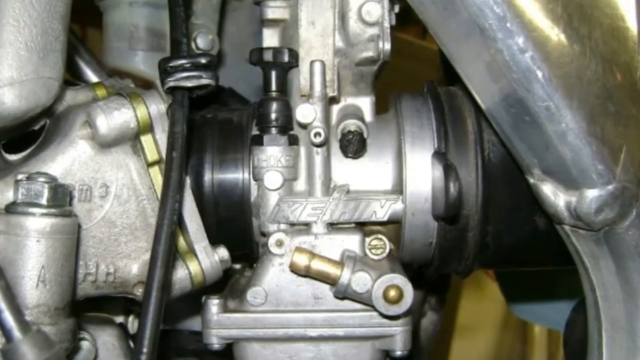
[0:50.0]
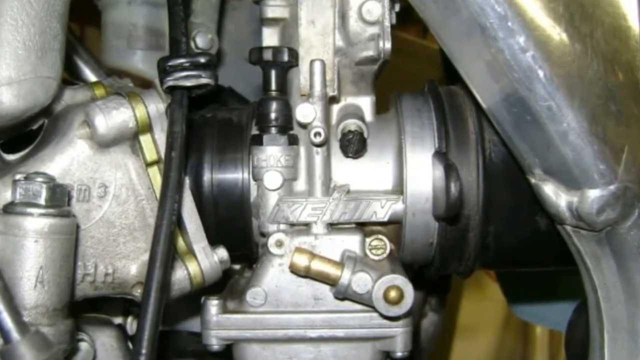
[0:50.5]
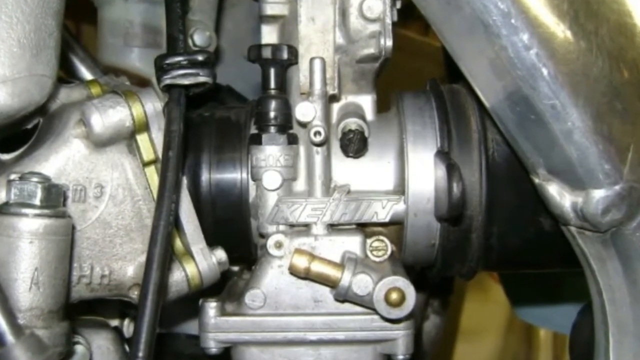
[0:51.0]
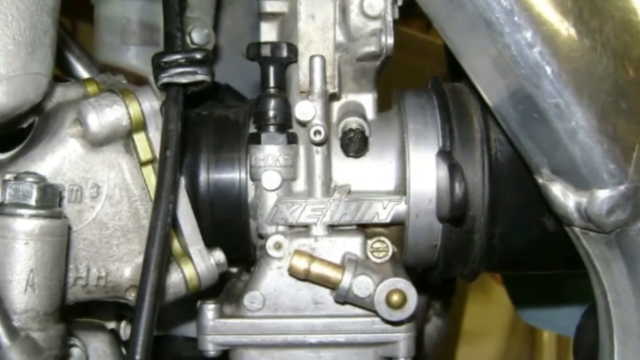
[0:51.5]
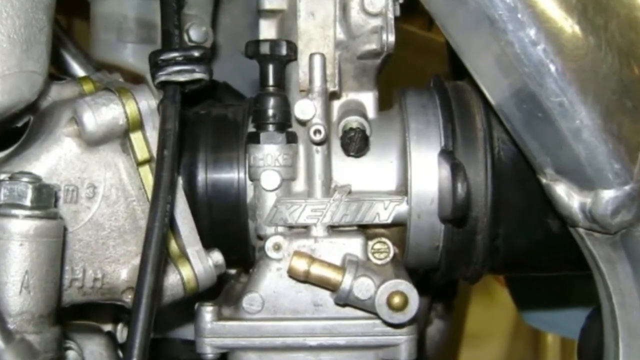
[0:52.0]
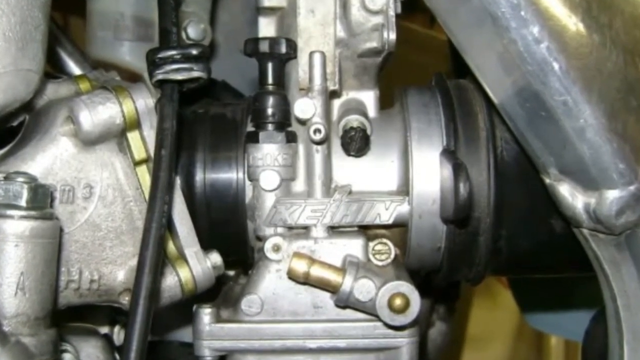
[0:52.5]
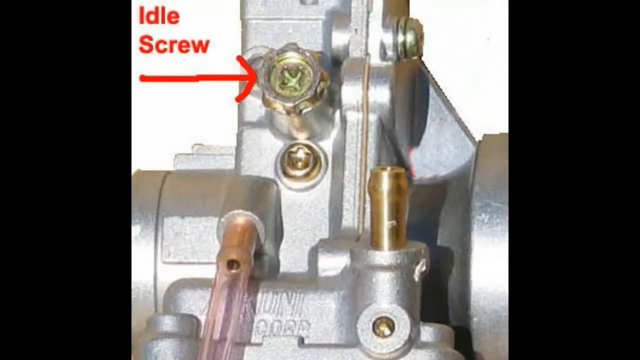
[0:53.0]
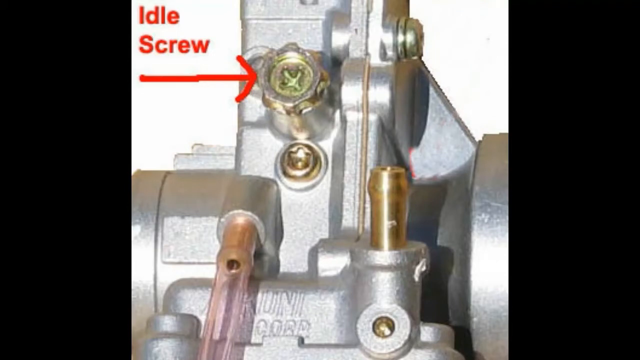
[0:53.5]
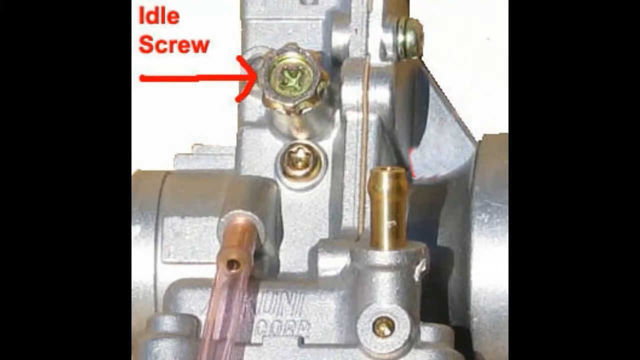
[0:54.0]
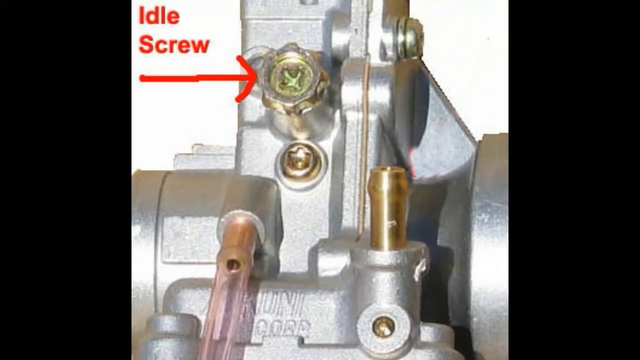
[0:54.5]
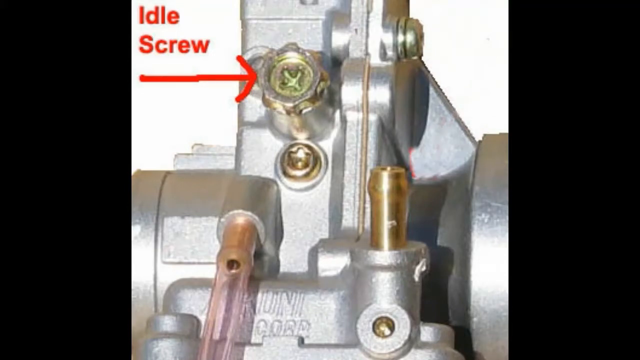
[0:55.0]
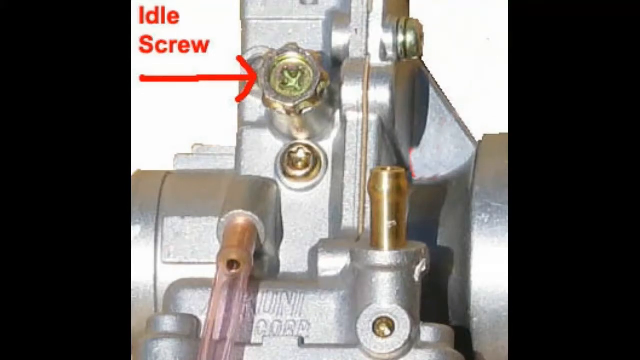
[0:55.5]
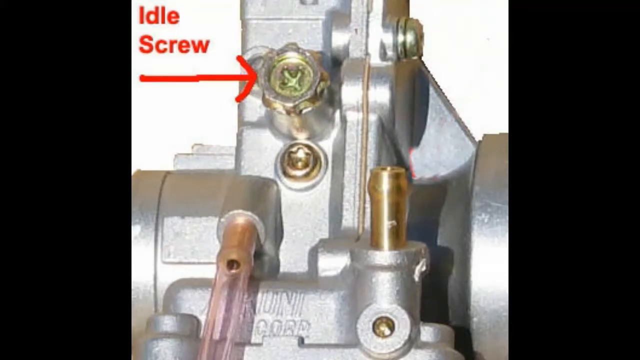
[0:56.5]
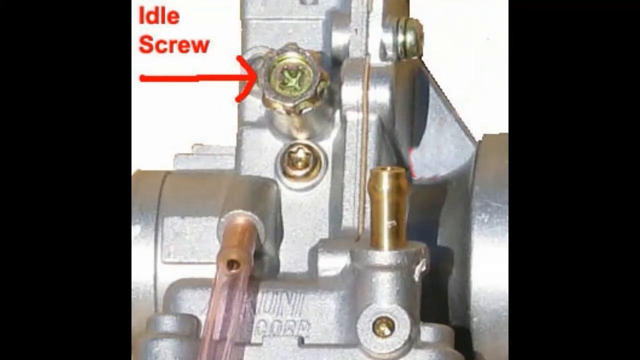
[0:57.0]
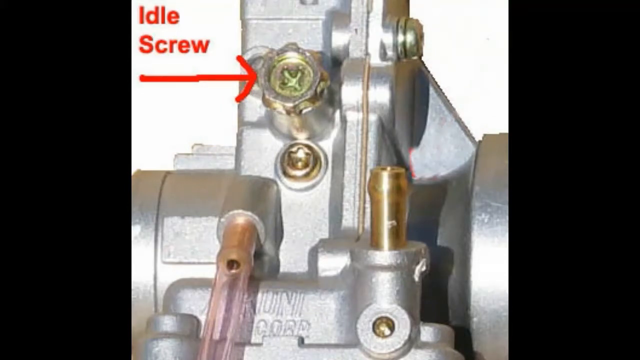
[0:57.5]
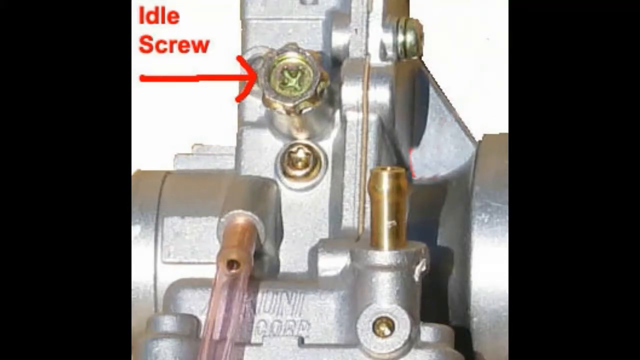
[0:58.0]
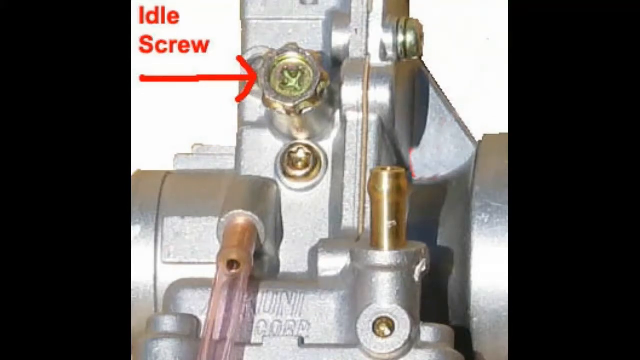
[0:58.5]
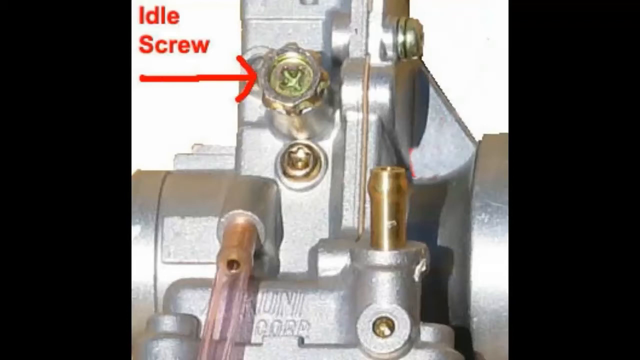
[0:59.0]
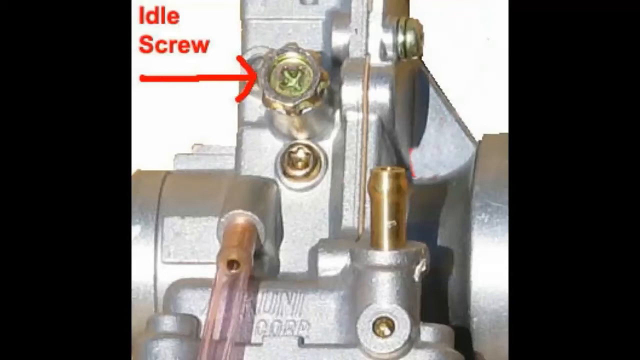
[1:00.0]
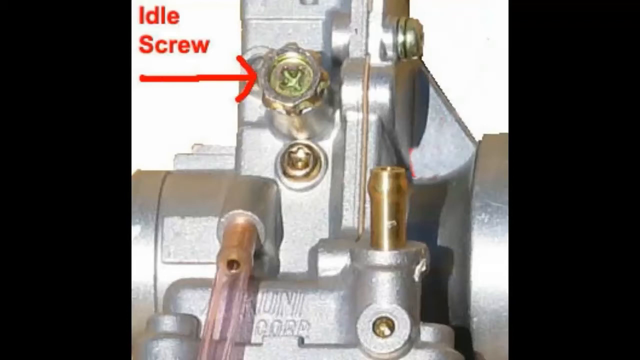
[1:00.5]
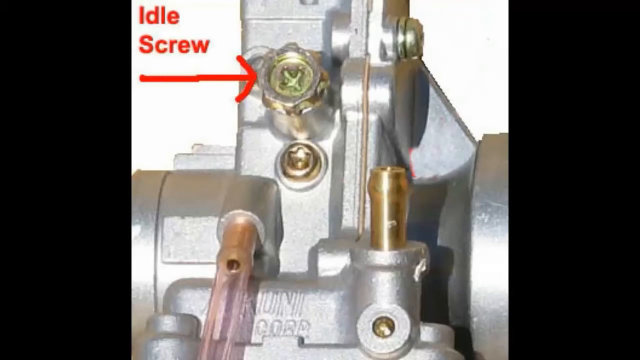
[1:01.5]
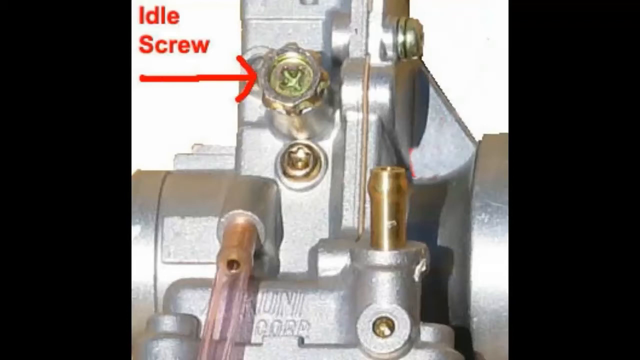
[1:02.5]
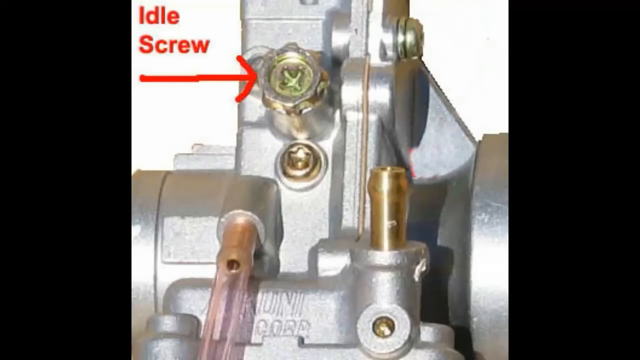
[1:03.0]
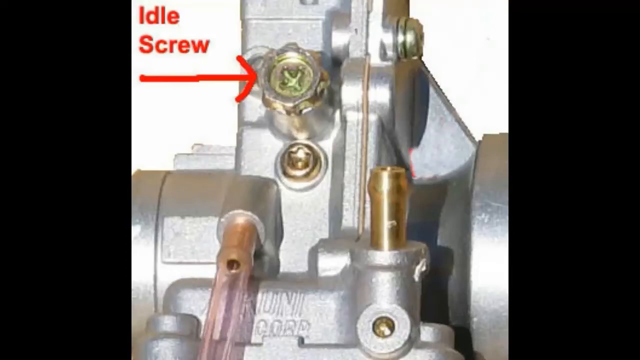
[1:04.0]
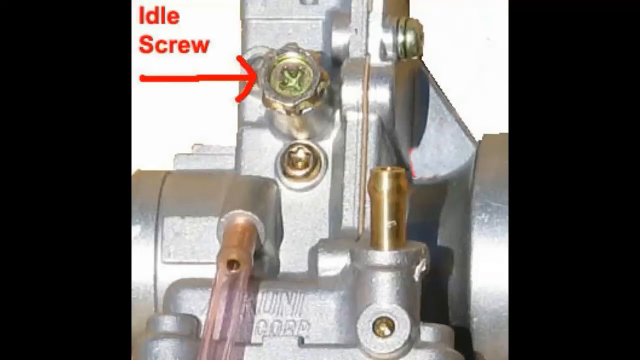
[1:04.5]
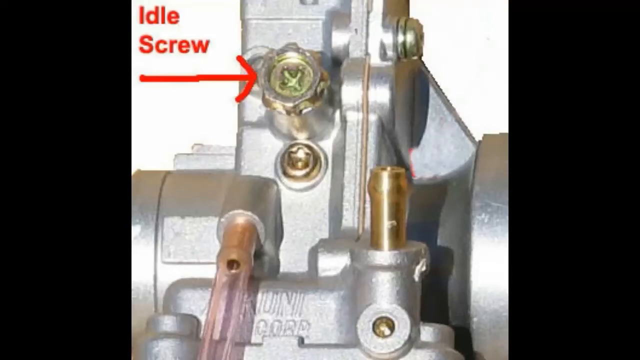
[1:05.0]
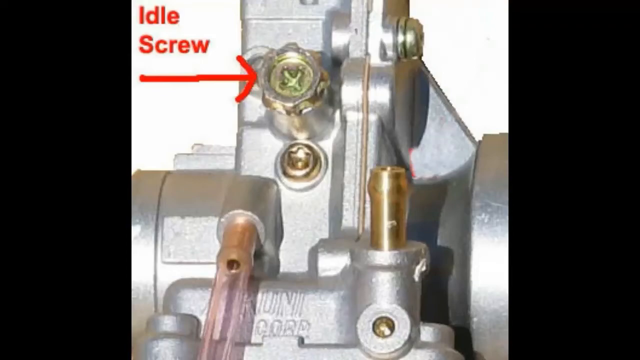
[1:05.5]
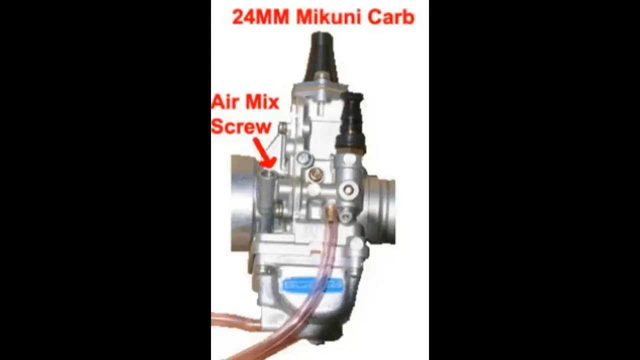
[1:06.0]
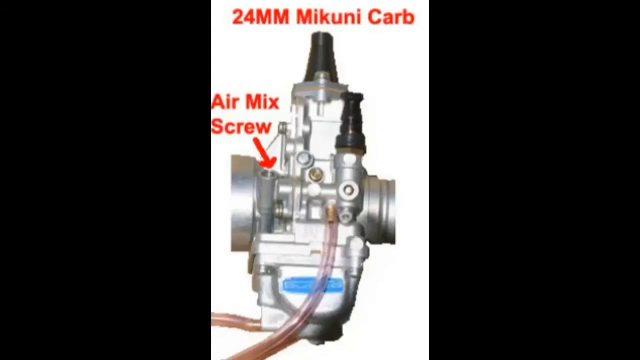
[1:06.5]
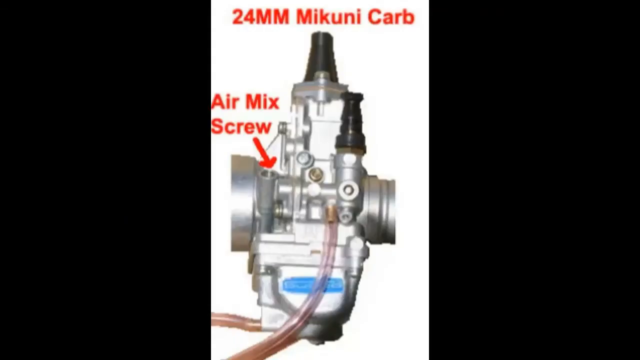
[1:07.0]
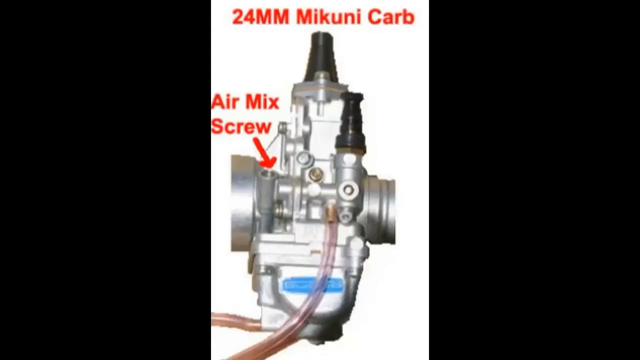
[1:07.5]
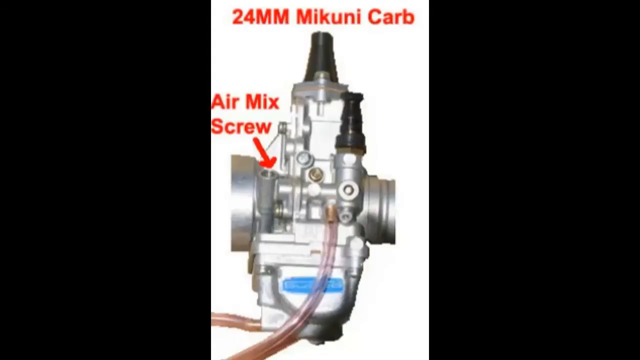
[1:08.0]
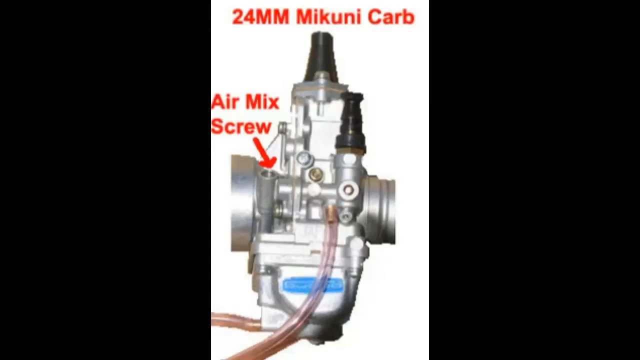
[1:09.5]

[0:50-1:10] The video zooms in on the part again, and something called Kuni or Kine is inscribed in the video, apparently as branding. The view returns to the screw and then to the air mix screw. Two screws, the idle screw and the air mix screw, are shown along with a 24 millimeter Makuni carb.